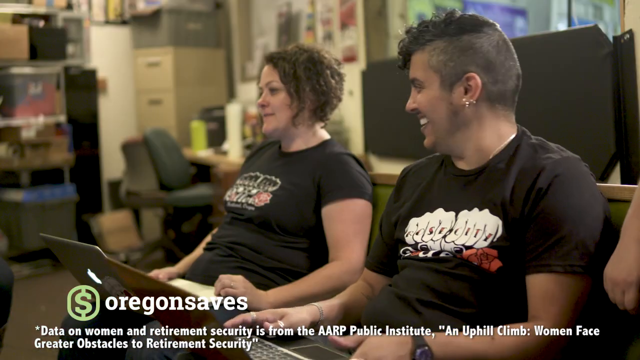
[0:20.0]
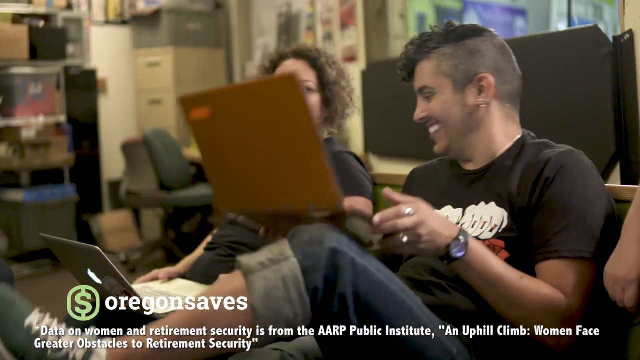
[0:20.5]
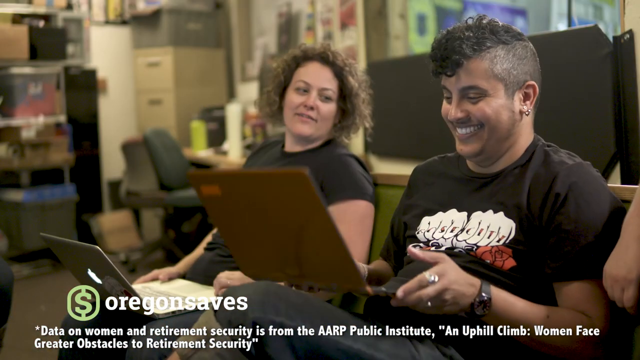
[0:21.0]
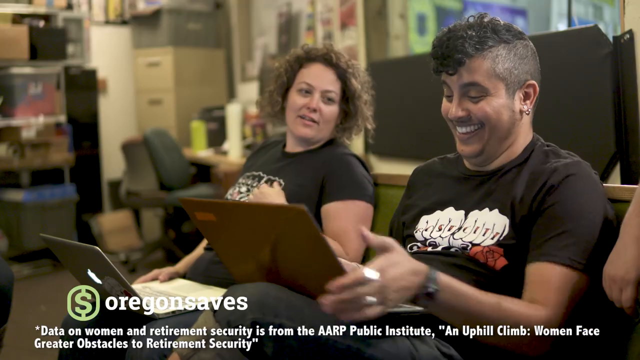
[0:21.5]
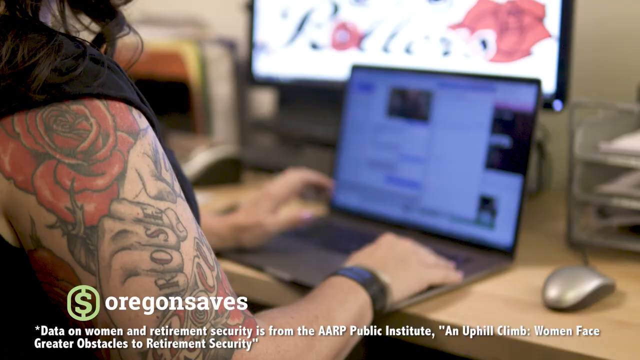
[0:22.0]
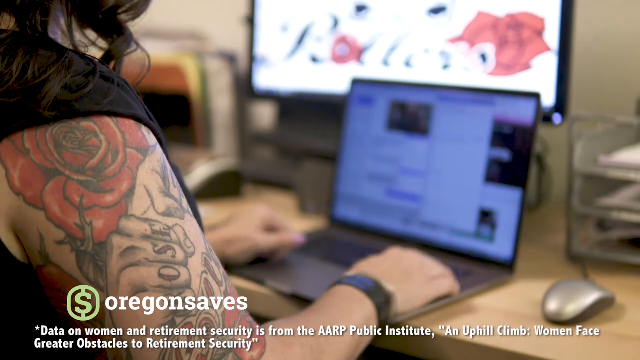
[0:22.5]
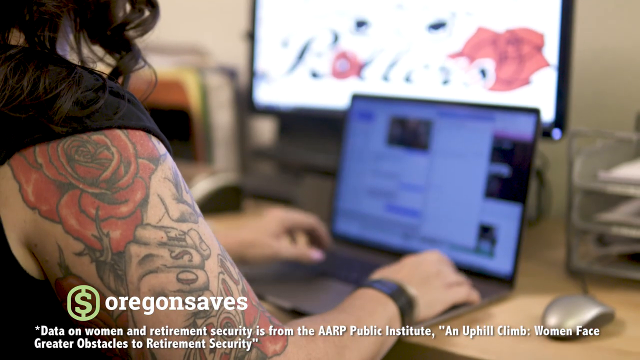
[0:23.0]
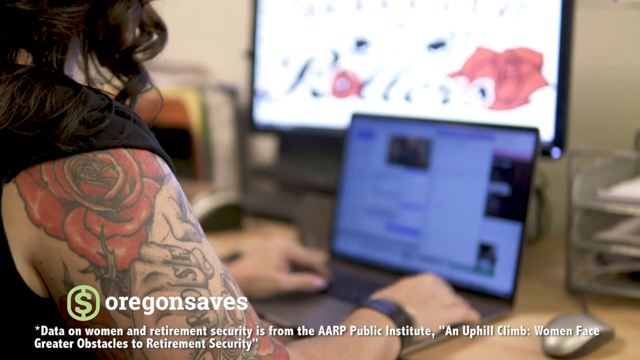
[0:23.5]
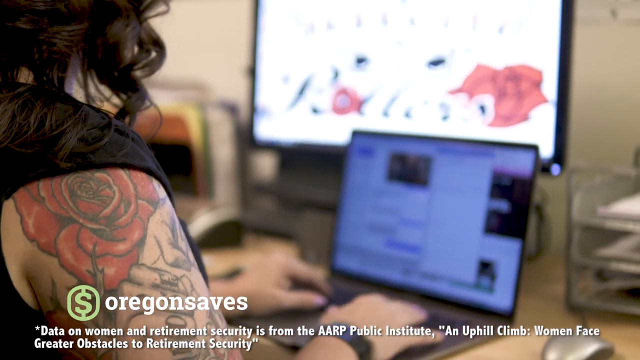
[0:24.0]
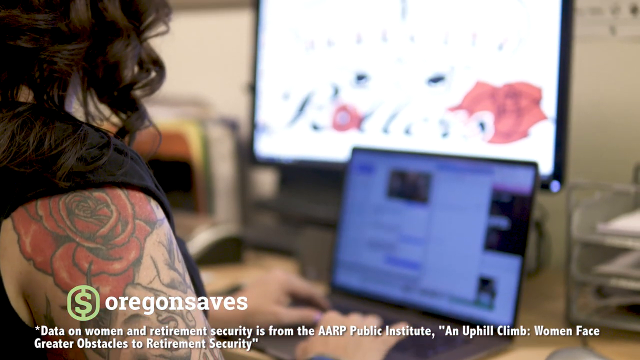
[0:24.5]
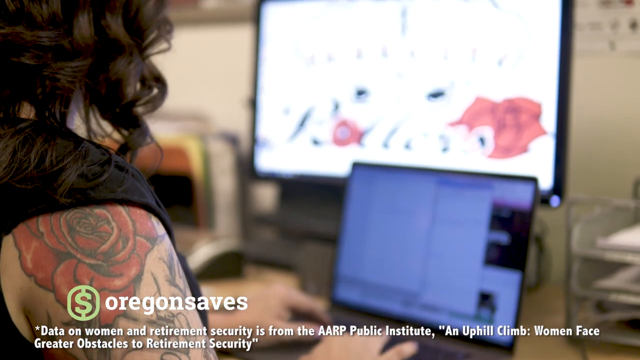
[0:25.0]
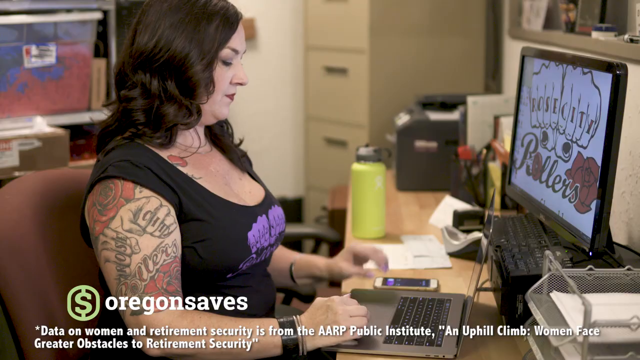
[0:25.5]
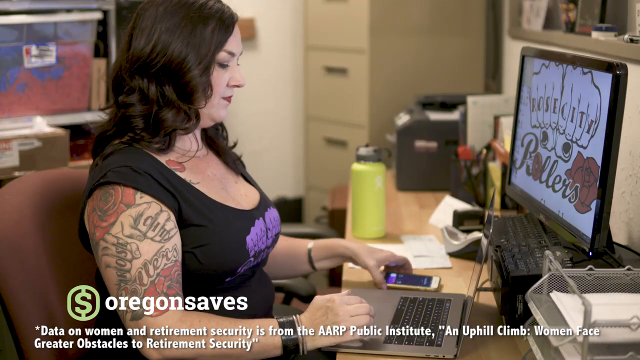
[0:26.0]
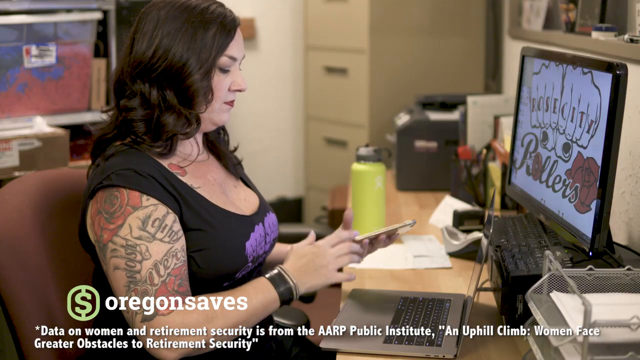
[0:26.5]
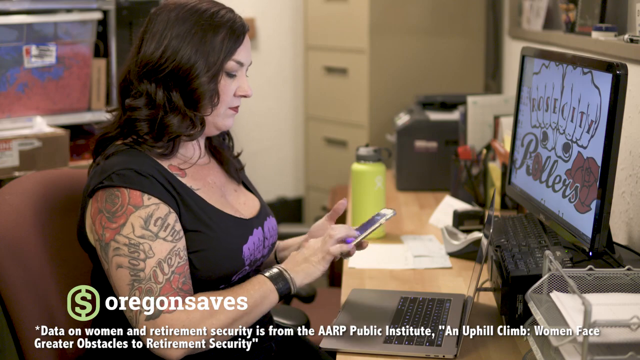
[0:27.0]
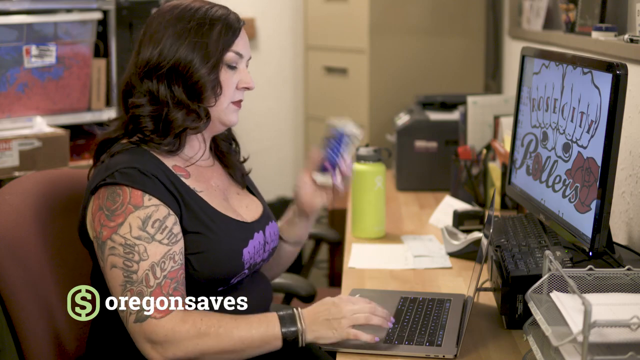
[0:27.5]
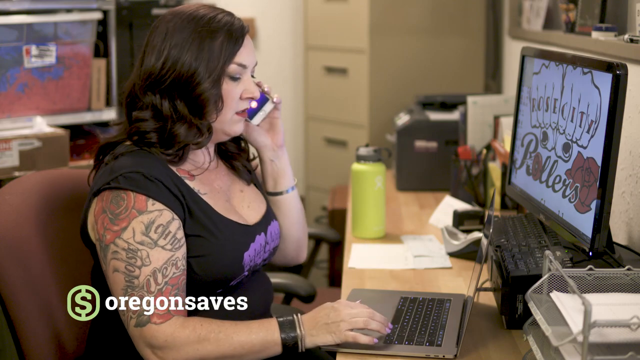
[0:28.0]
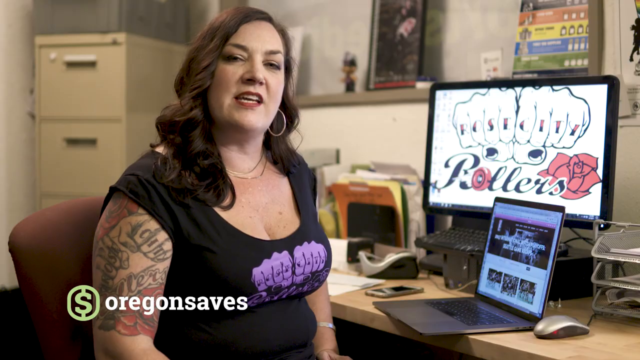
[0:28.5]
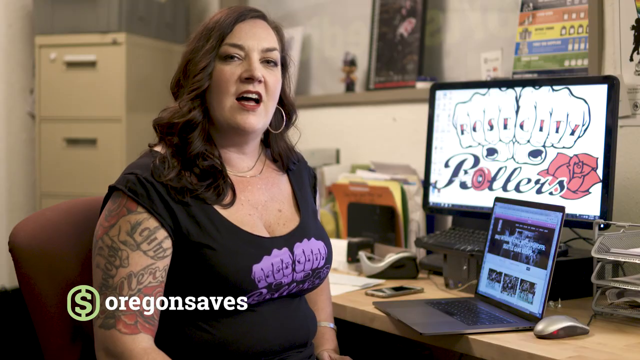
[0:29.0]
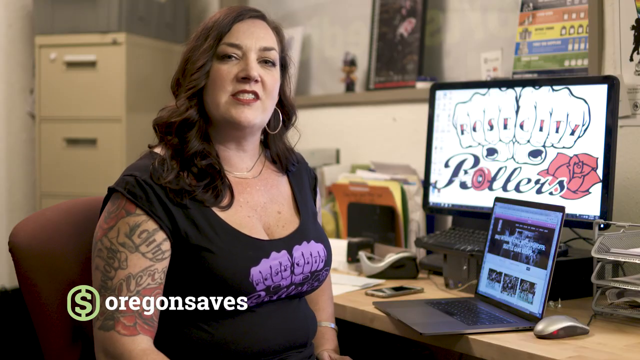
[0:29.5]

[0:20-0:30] Two people are on laptops, one a woman and one possibly a man. The man is laughing. Both wear black shirts, and a logo for Oregon Saves is at the bottom left. The scene transitions to another woman on a laptop, also wearing a black shirt, who answers her cell phone. Behind the laptop is a computer with a Rose City Rollers wallpaper. She is inside an office, and the video then transitions to a scene where the woman begins talking toward the camera.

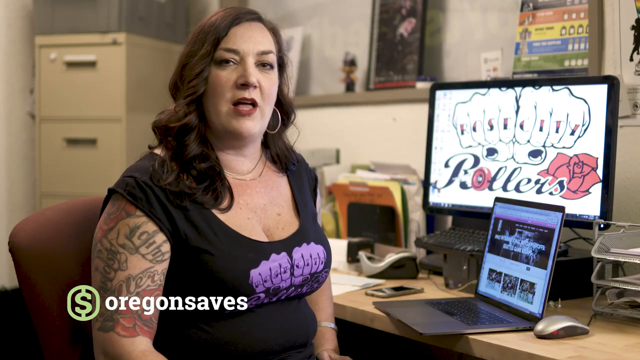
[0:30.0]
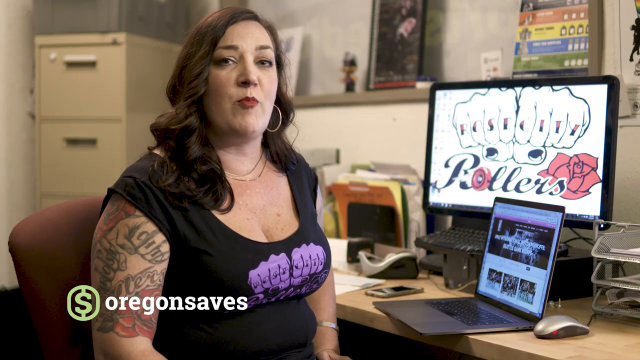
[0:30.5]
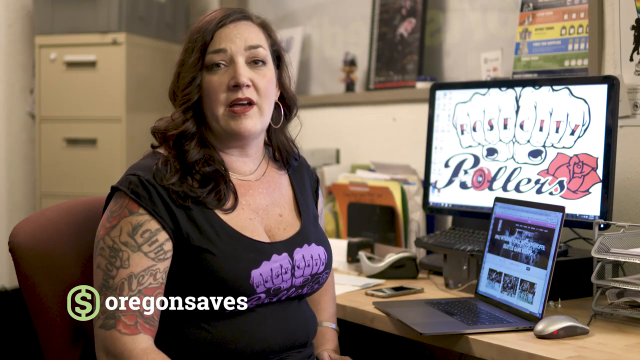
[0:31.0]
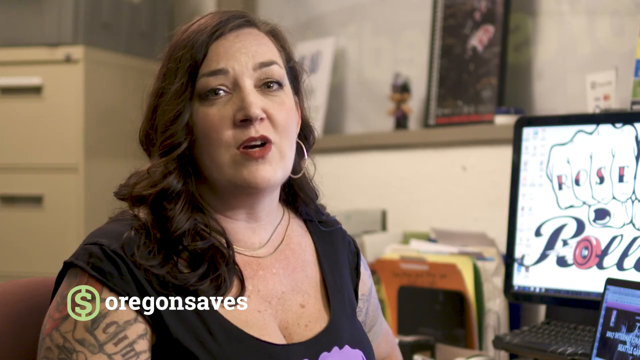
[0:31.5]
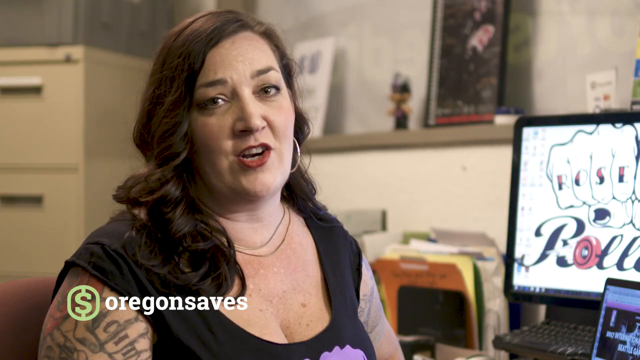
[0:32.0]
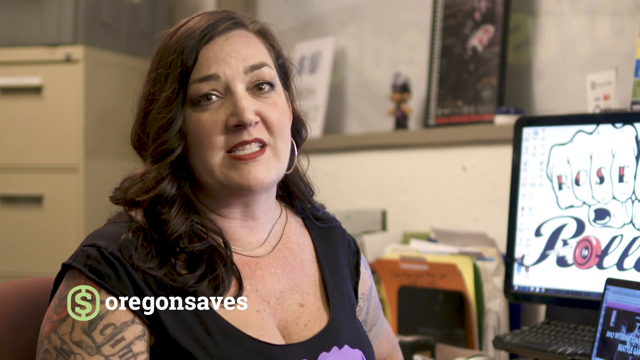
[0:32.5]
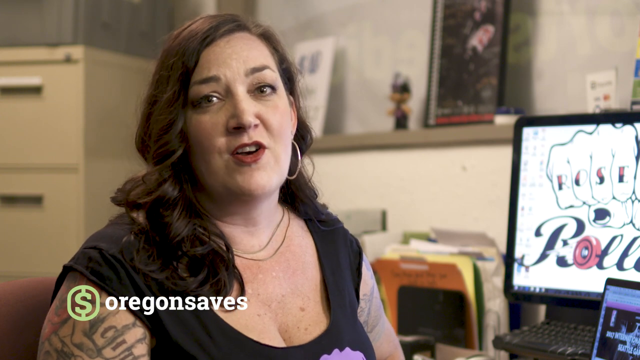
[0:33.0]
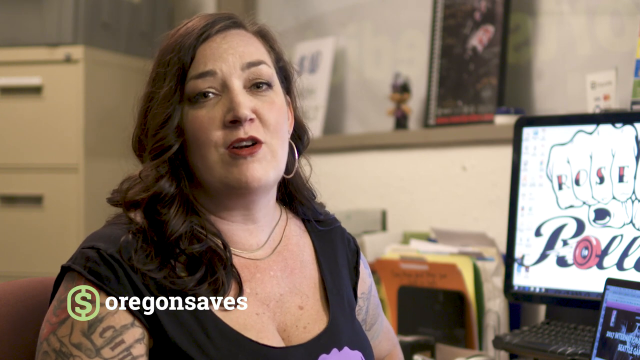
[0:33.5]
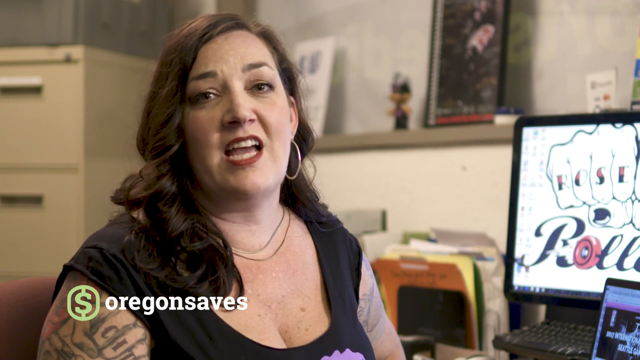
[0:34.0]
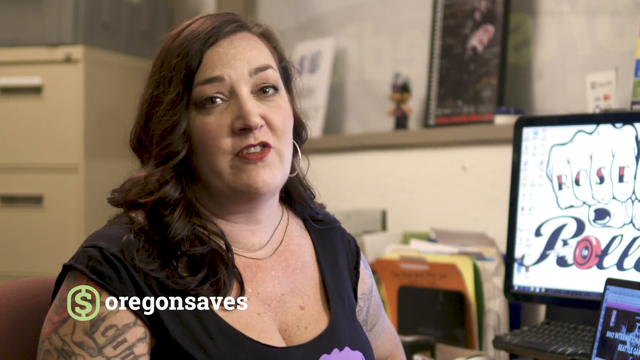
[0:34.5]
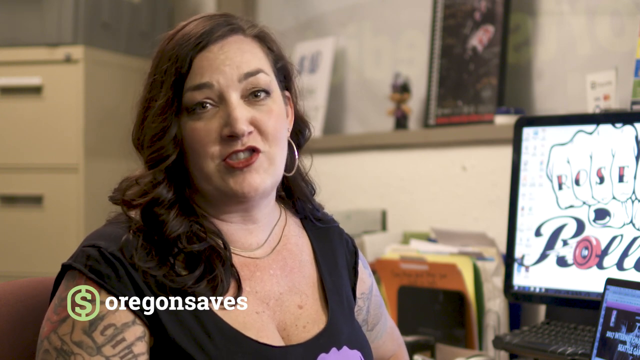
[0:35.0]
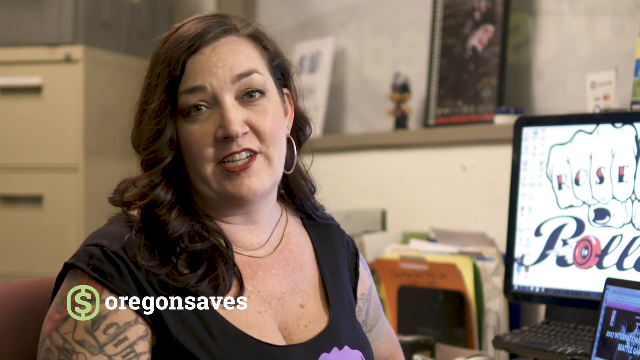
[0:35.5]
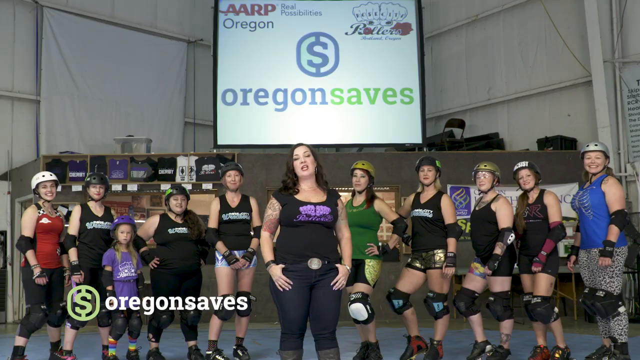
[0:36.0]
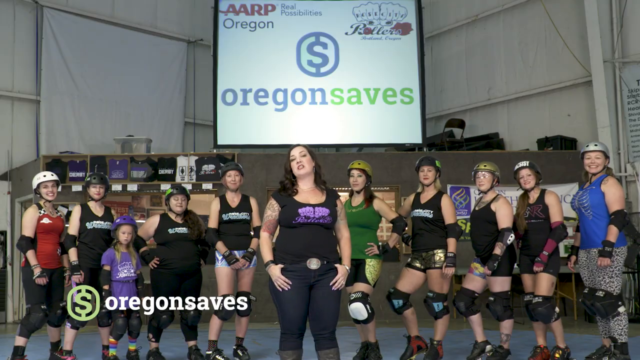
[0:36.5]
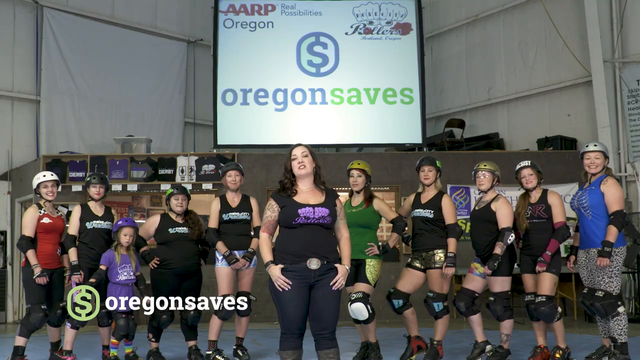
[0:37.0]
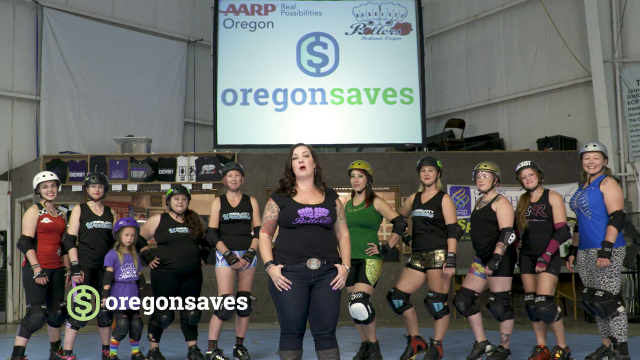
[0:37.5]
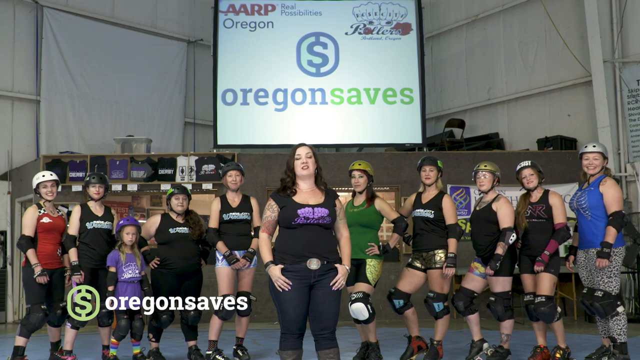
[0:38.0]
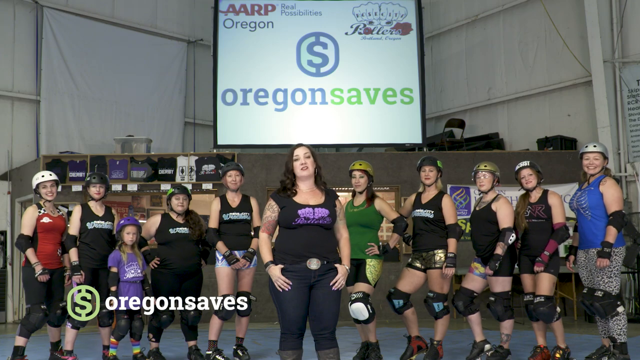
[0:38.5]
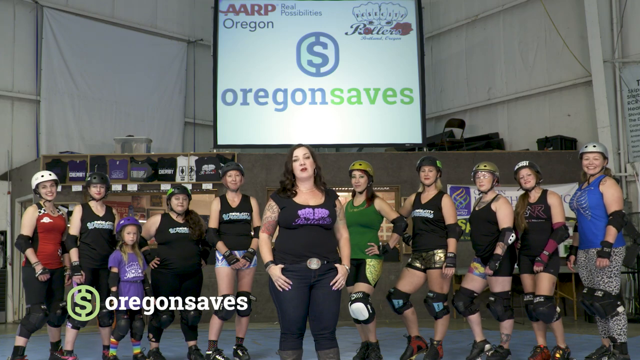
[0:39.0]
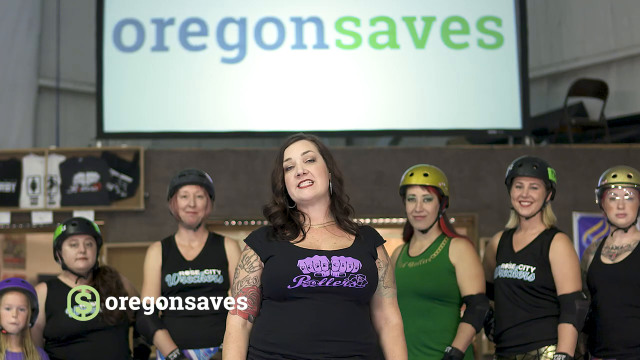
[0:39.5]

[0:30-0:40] A woman is in her office with a laptop and a computer behind her. She sits in a brown chair and talks toward the camera, with a beige cabinet and multiple folders behind her. The camera zooms in on her face as she keeps talking. The scene then transitions to the same woman in front of a group of ten women, all in roller skating gear; one appears to be a younger girl. The Oregon Saves logo is behind the group.